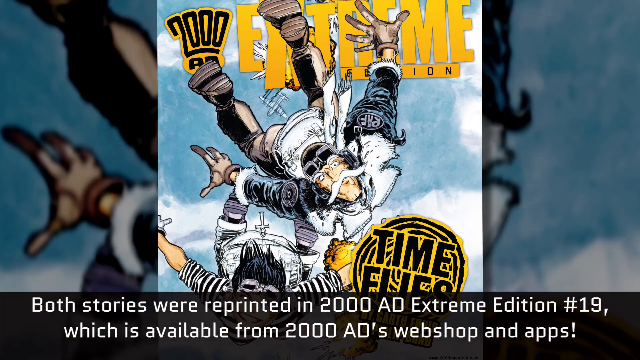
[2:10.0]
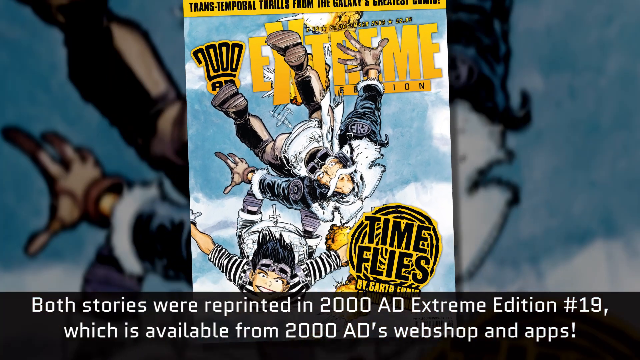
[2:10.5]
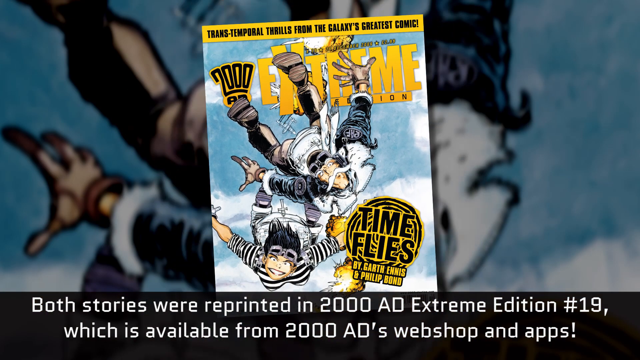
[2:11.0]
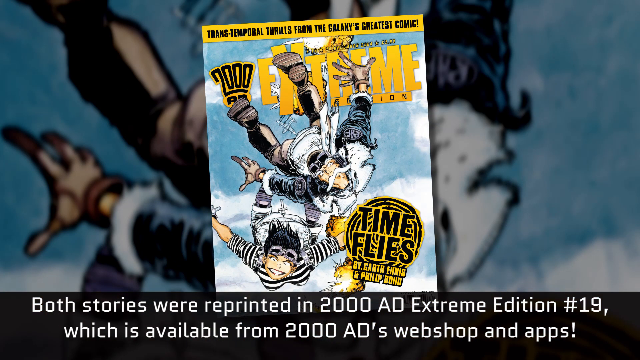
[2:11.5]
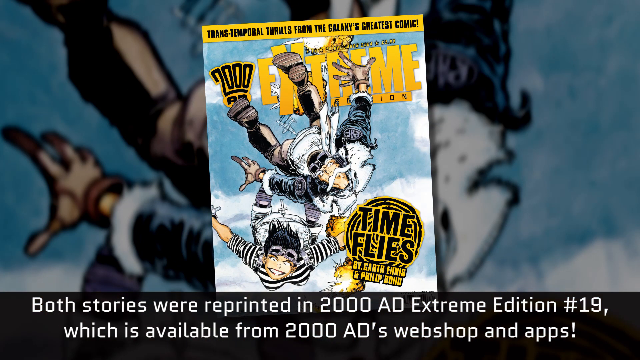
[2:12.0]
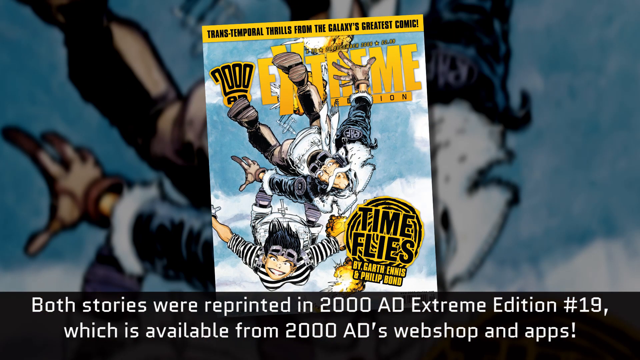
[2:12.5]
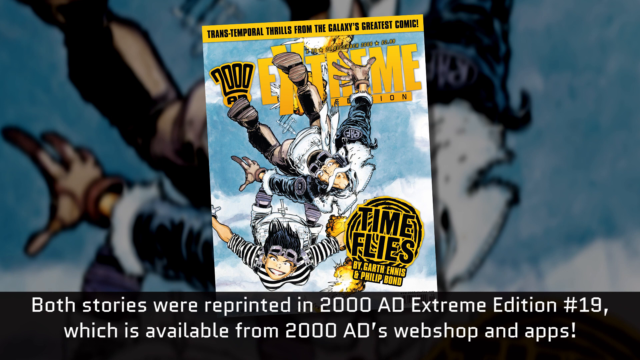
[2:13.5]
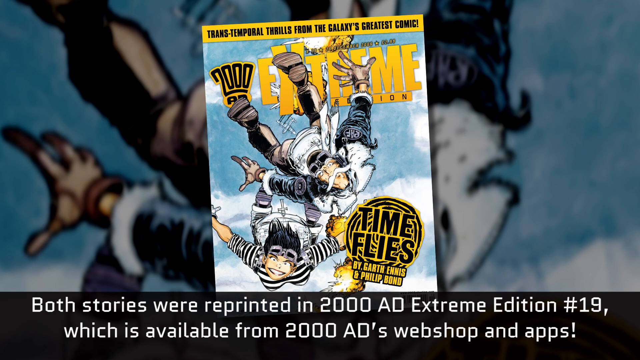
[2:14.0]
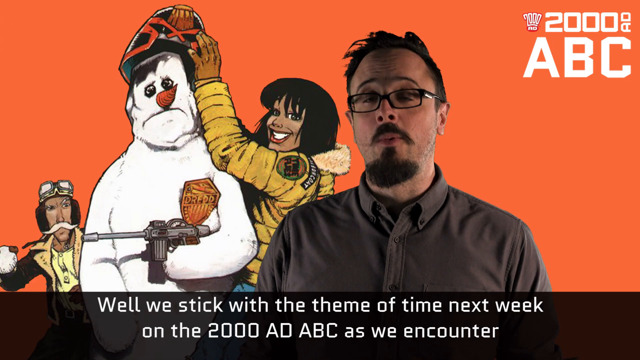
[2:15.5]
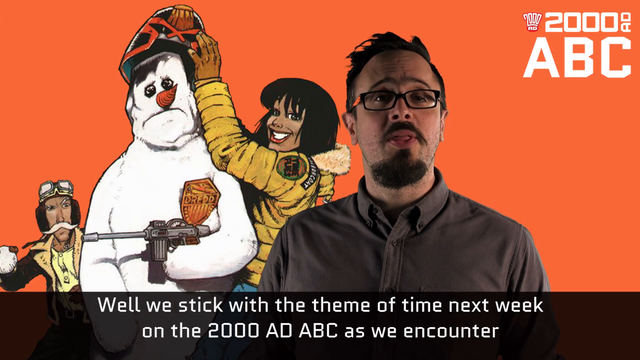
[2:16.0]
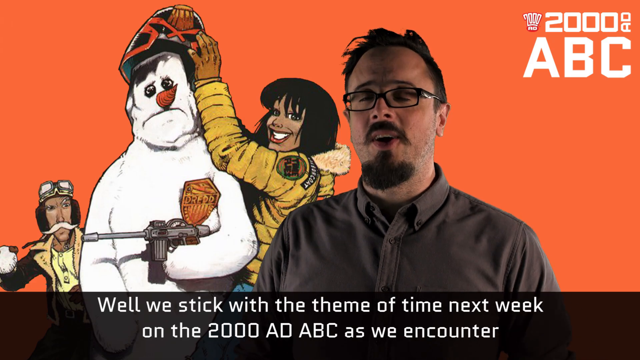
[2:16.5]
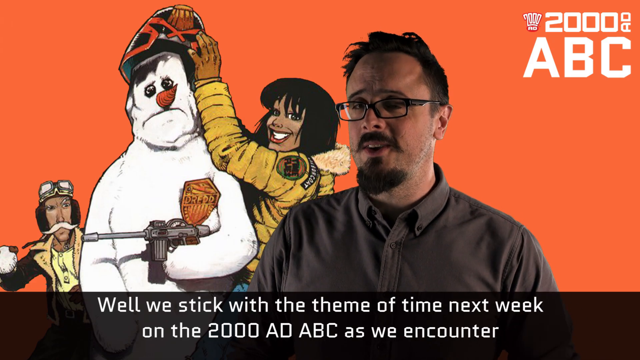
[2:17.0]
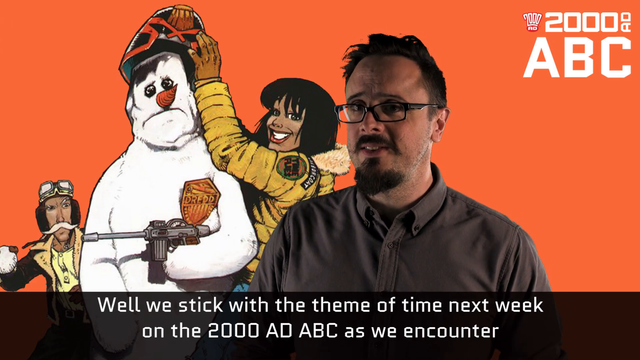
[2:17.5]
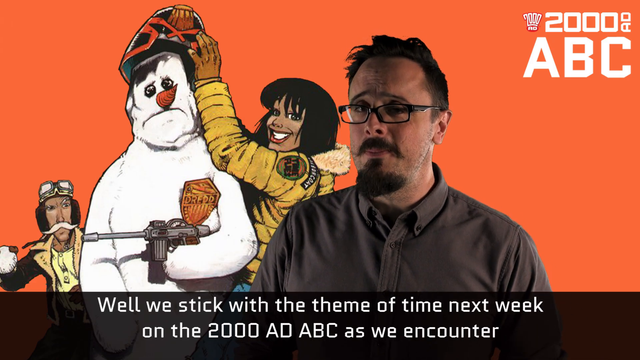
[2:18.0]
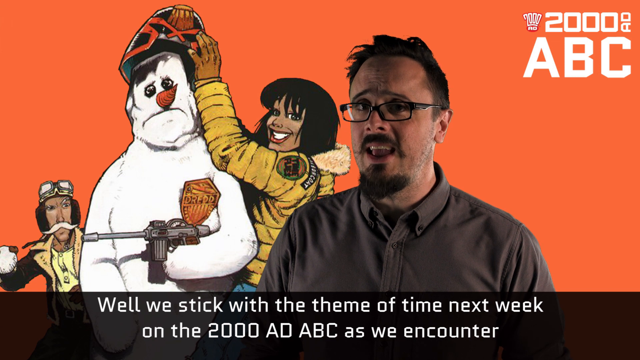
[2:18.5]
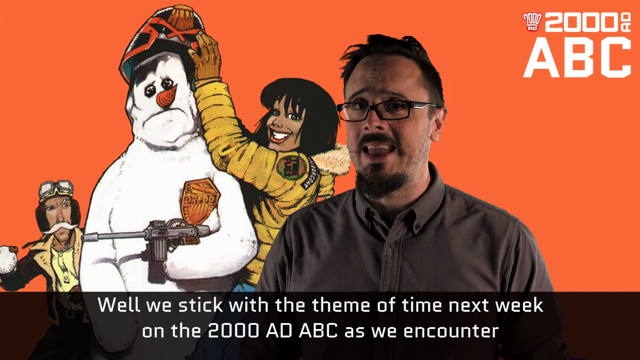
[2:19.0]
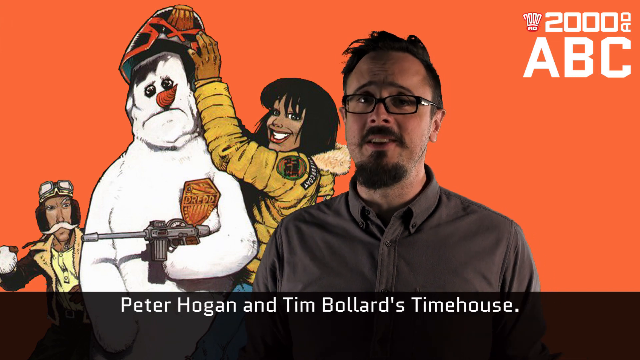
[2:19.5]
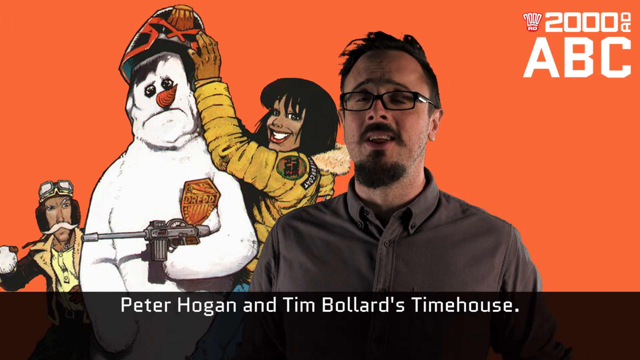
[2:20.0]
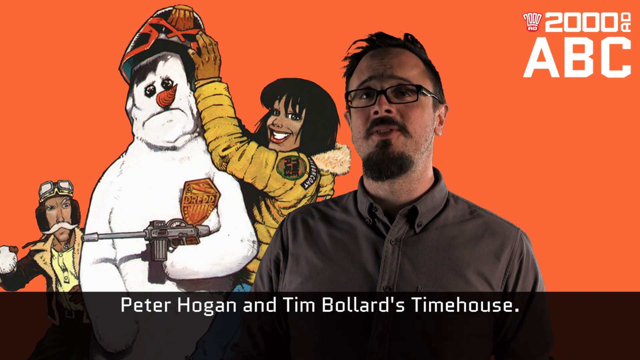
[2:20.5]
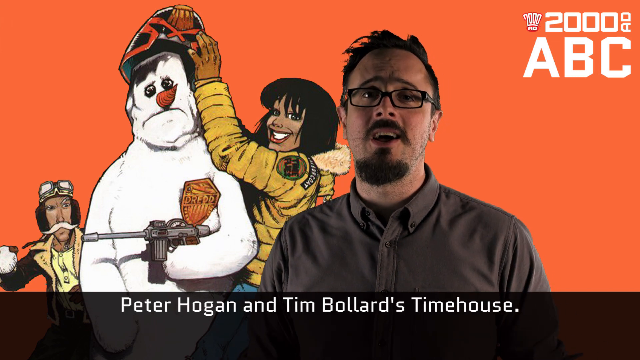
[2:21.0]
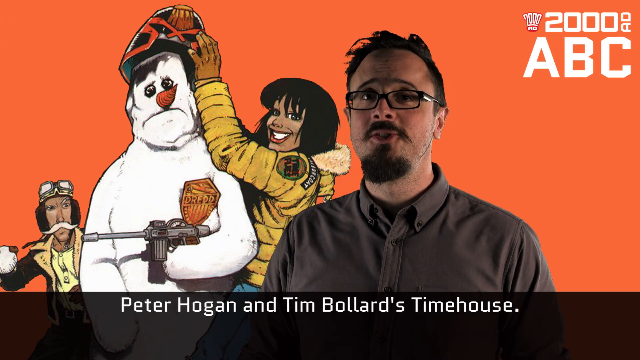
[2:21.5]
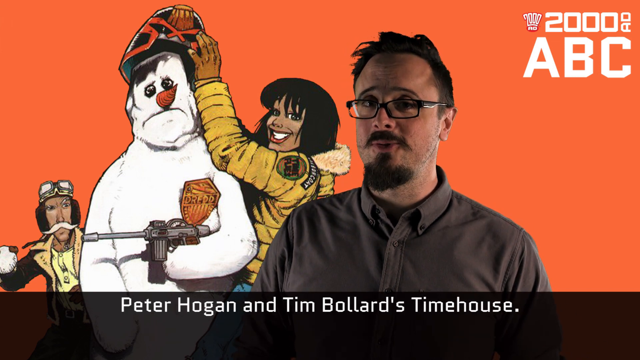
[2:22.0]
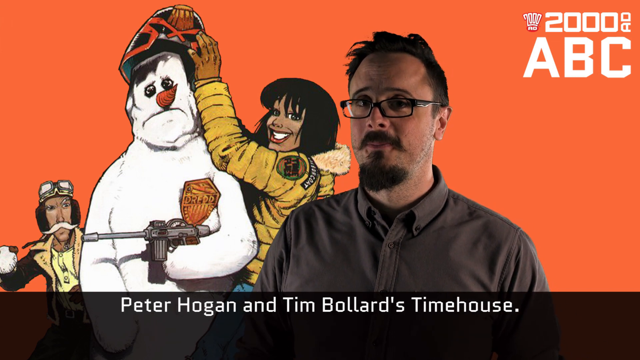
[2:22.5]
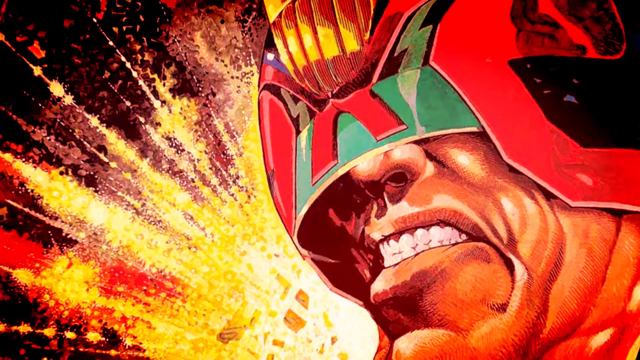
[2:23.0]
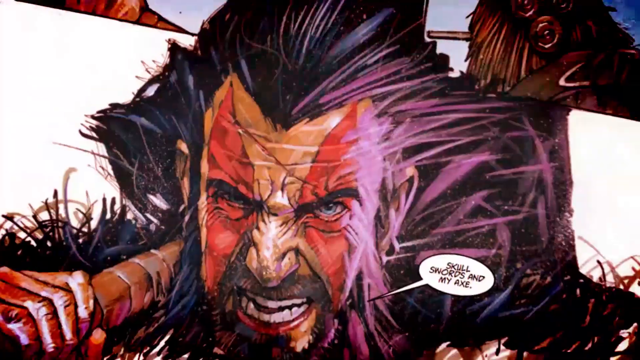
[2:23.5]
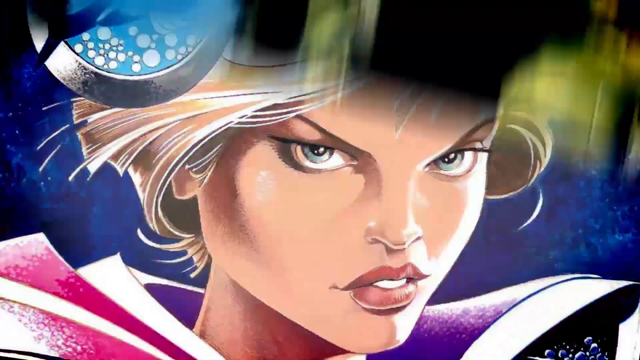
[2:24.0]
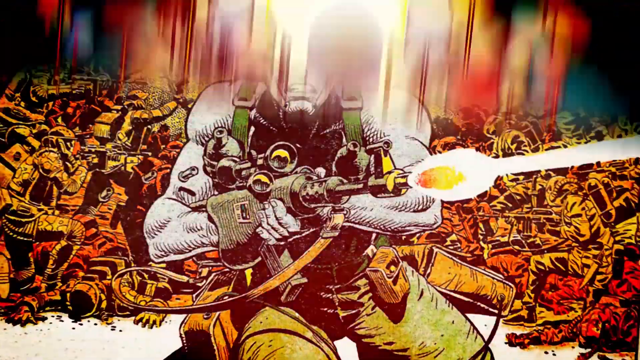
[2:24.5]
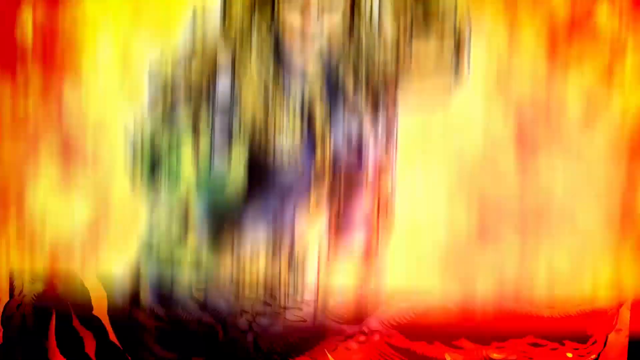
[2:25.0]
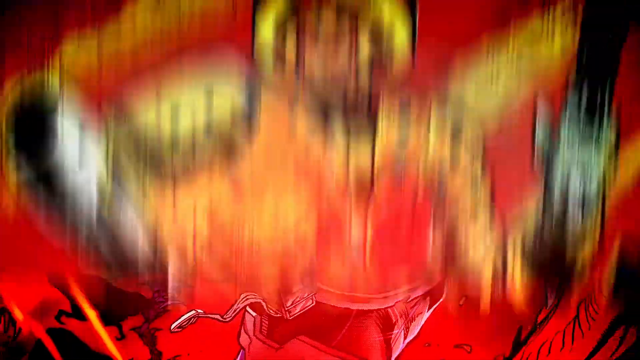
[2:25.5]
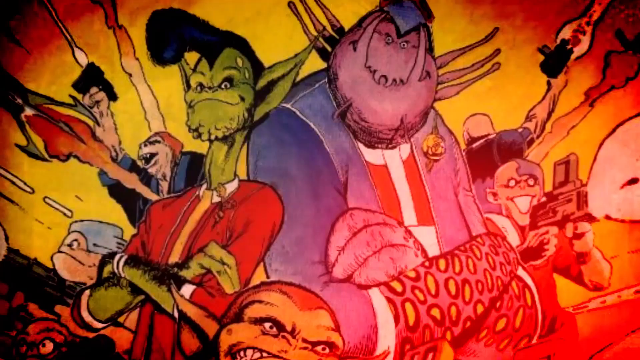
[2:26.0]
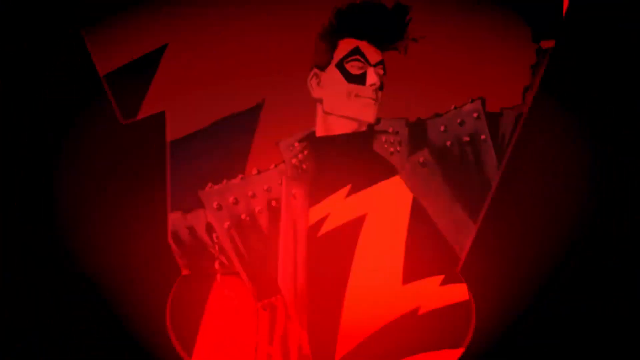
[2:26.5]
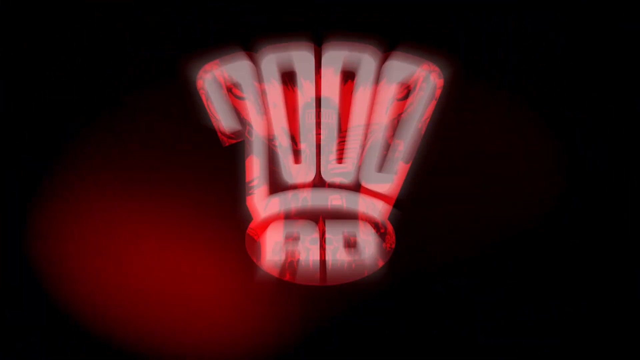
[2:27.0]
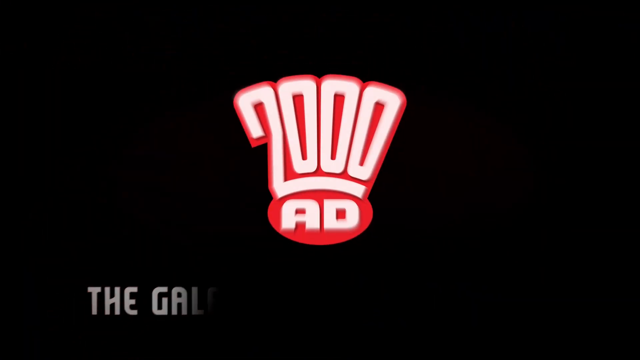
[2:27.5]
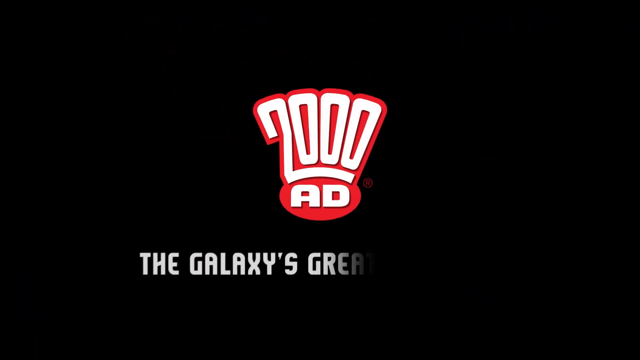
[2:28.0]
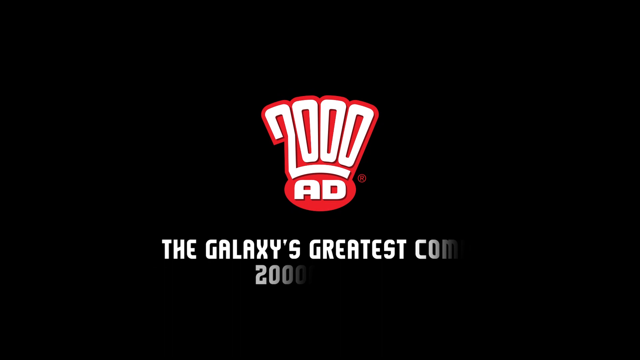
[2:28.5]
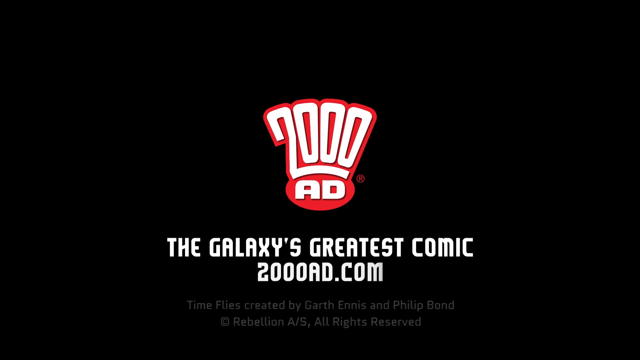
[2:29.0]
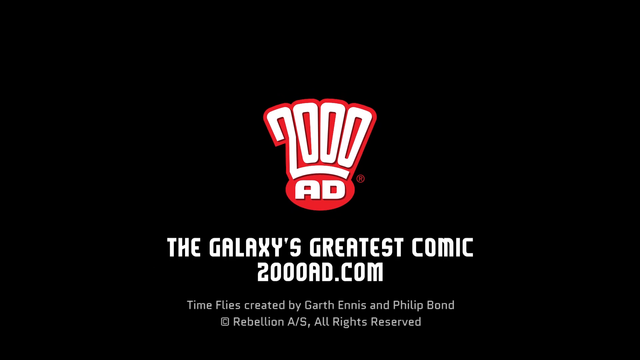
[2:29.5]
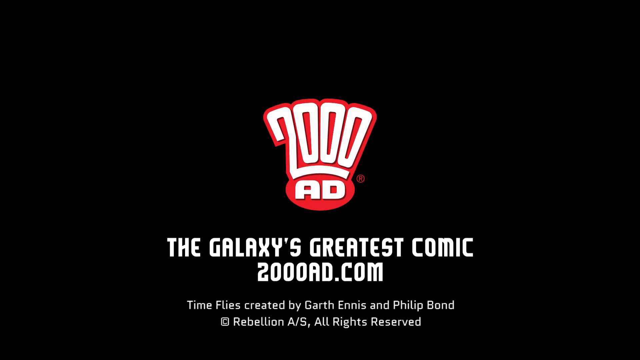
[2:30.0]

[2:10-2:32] A 2000 AD comic called Time Flies is on the screen, with a pilot on the front alongside the woman in the stripy top. The text at the bottom says "both stories were reprinted in 2000 AD Extreme Edition" and that it is available from the 2000 AD website and apps. The video cuts back to the man in the studio with the orange background, talking to the audience, while the writing at the bottom says "well we stick with the theme of time next week on 2000 AD ABC as we encounter" and then "Peter Hogan in Tim Bullard's Time House". Different comics come down from the right of the screen, not on long enough to make out what they are. Then a black screen shows "2000 AD", "the galaxy's greatest comics" and a web address, followed by "Time Flies created by Garth Ennis and Philip Bond" and "Rebellion", "all rights reserved".